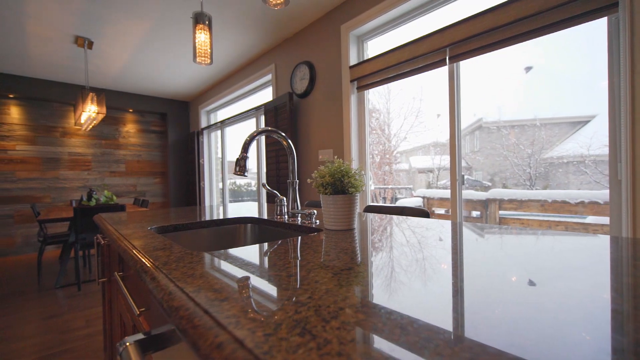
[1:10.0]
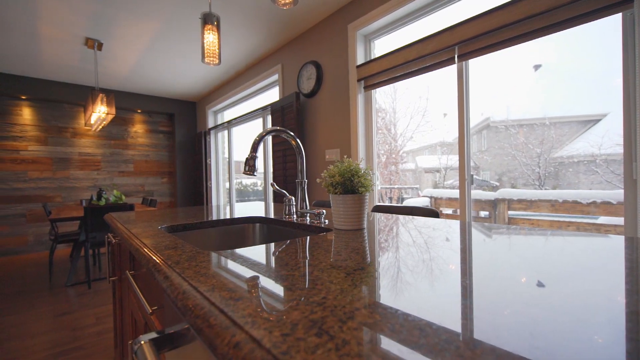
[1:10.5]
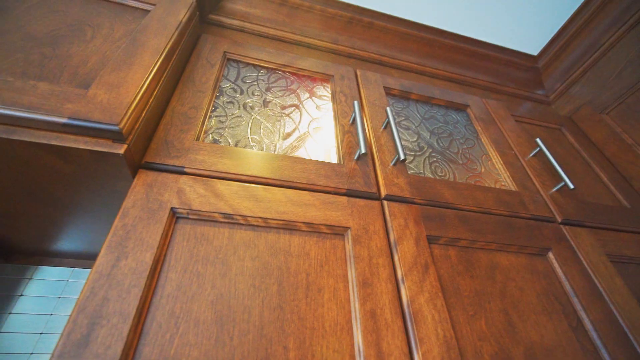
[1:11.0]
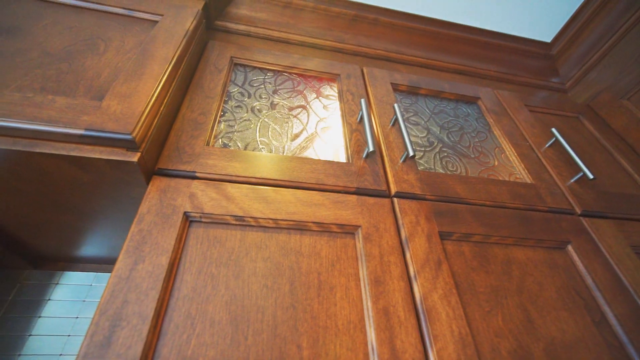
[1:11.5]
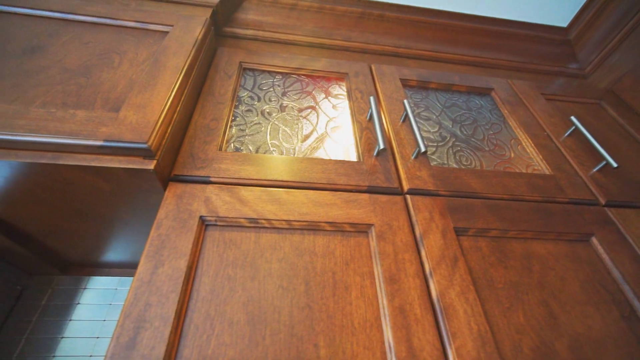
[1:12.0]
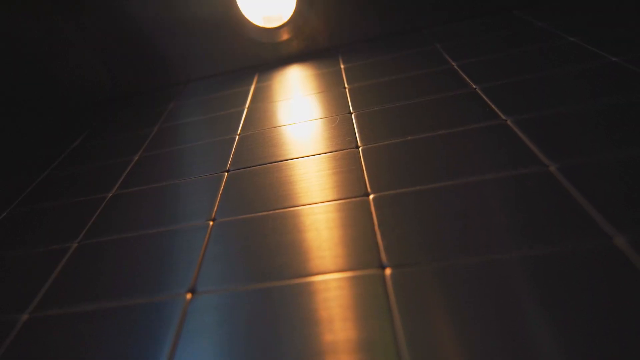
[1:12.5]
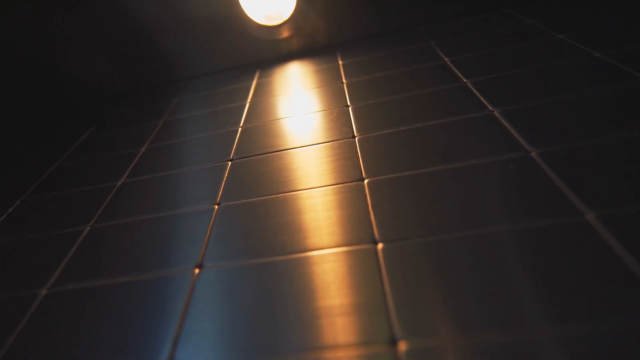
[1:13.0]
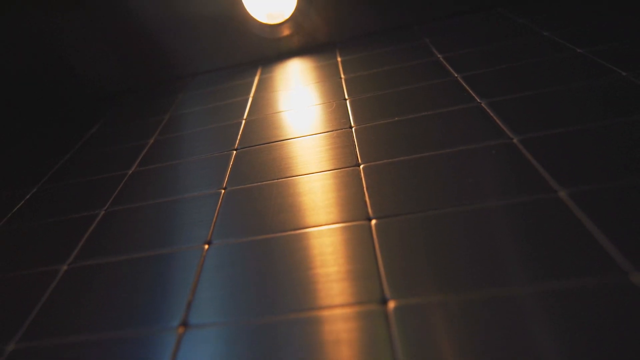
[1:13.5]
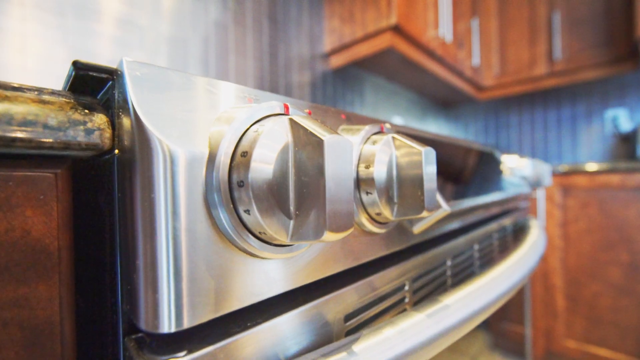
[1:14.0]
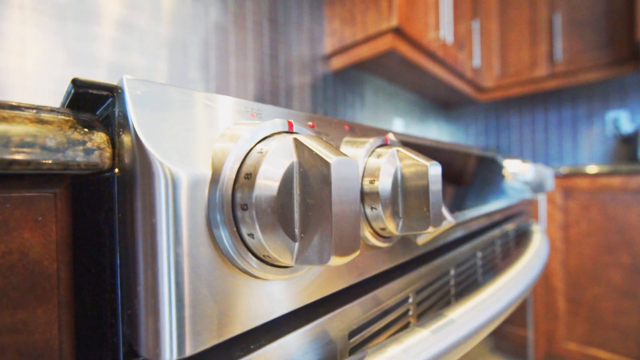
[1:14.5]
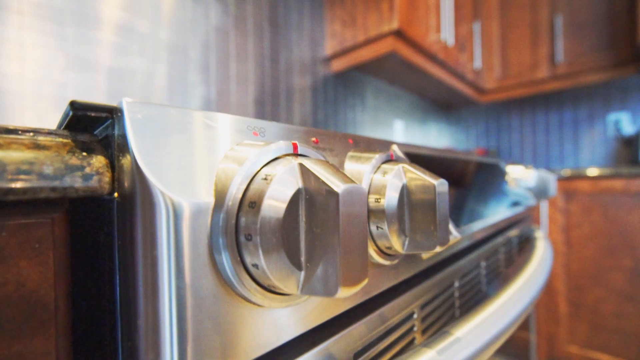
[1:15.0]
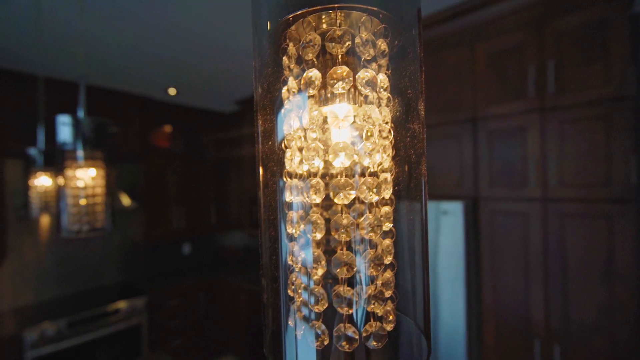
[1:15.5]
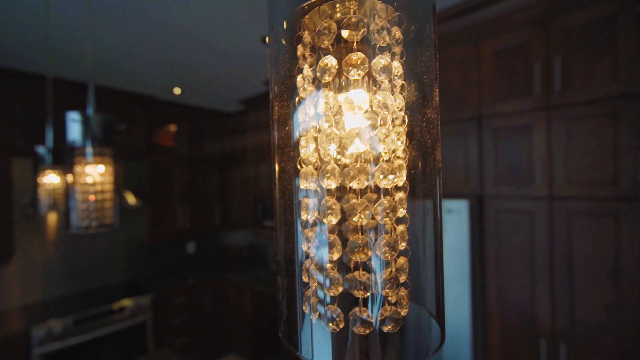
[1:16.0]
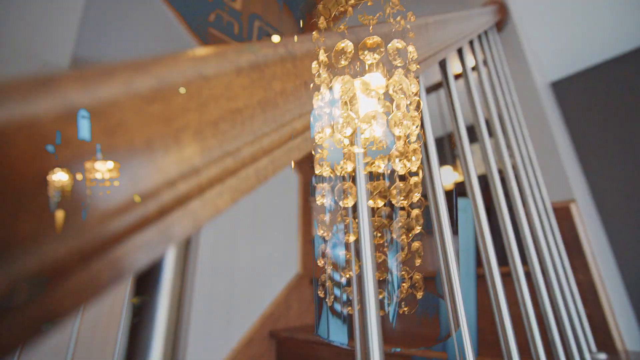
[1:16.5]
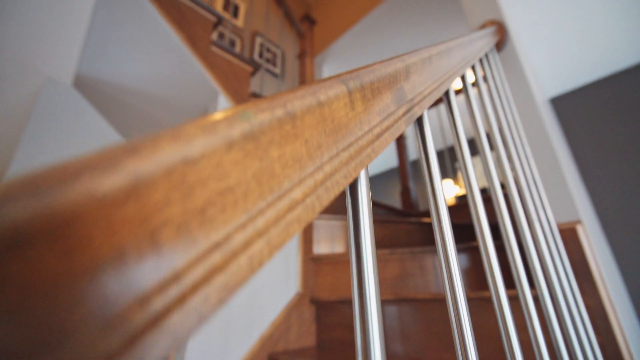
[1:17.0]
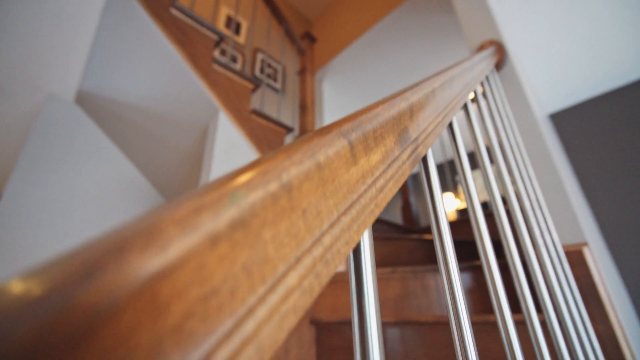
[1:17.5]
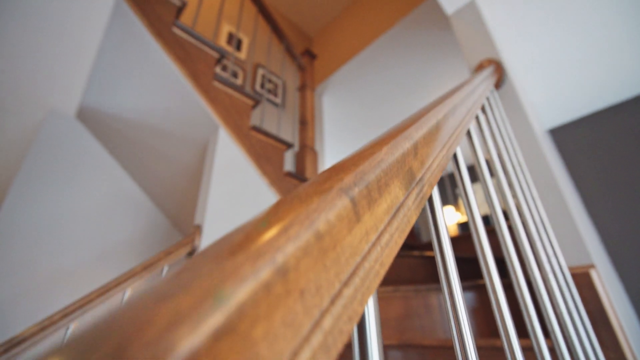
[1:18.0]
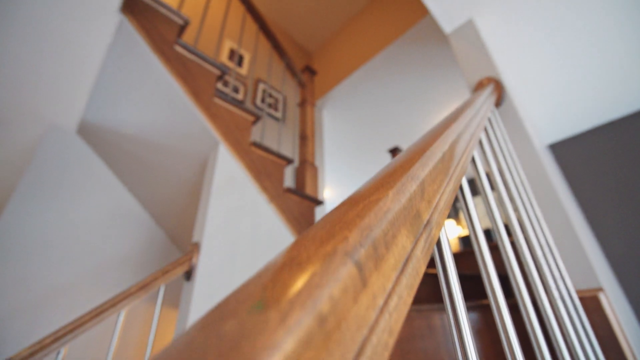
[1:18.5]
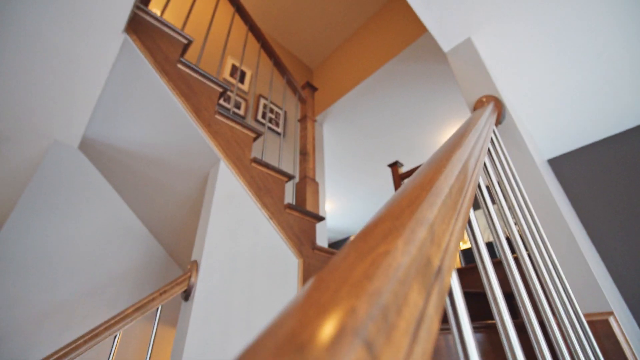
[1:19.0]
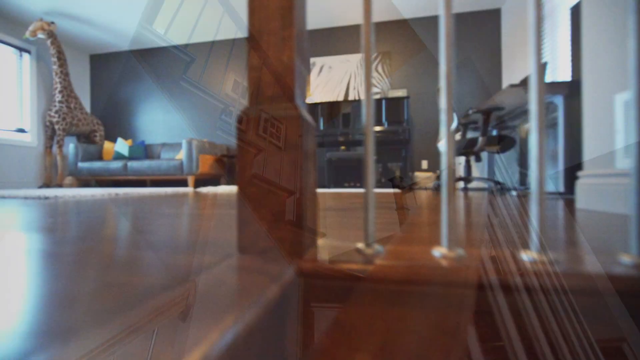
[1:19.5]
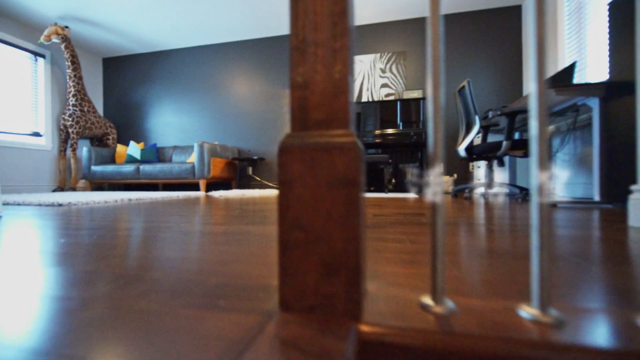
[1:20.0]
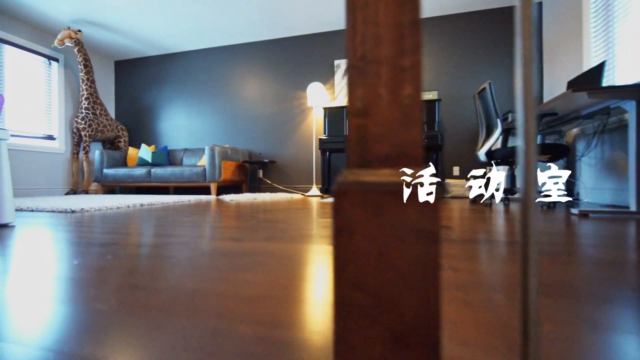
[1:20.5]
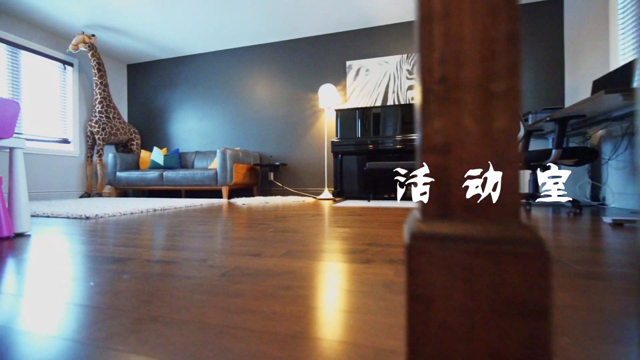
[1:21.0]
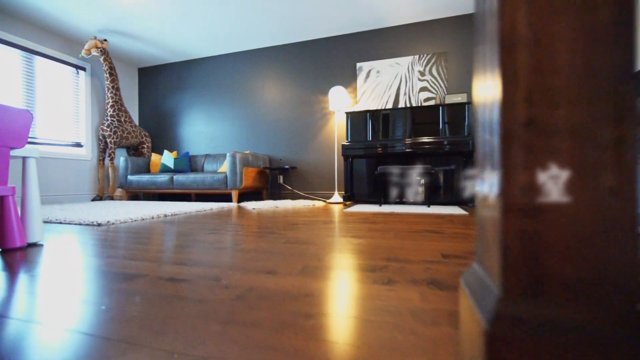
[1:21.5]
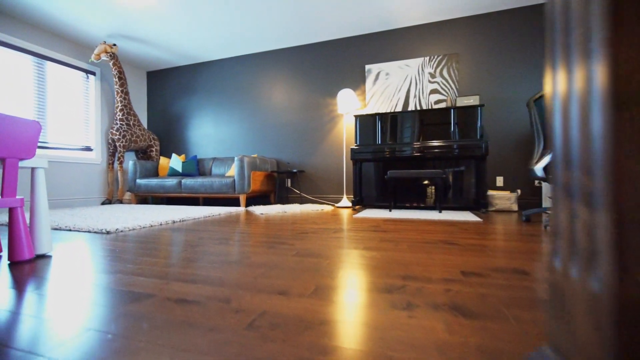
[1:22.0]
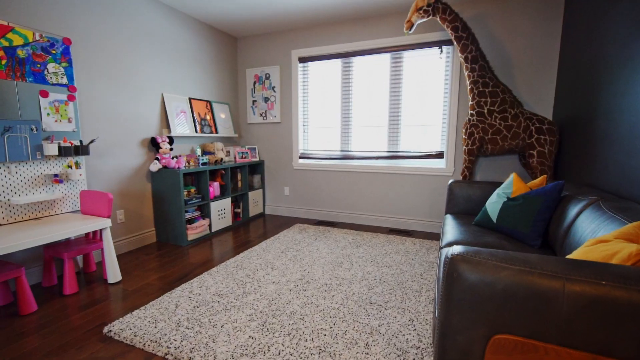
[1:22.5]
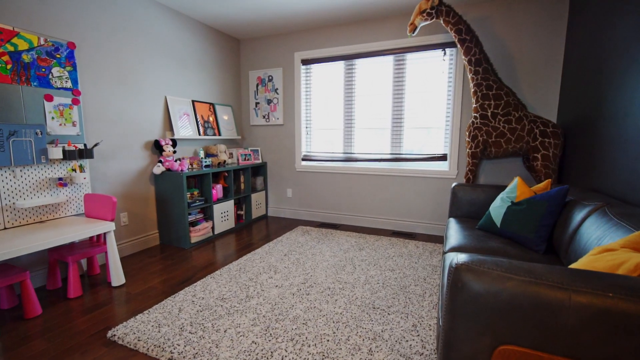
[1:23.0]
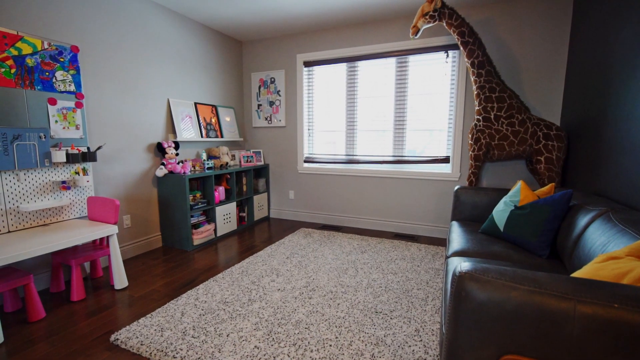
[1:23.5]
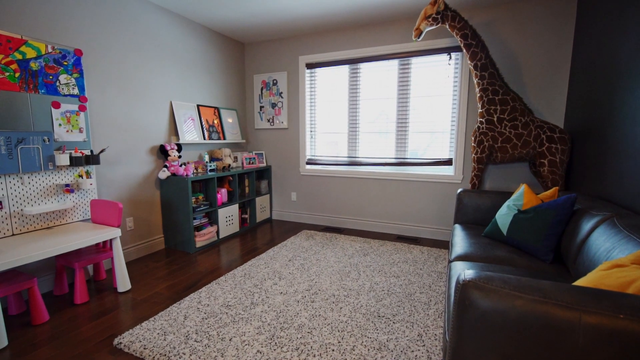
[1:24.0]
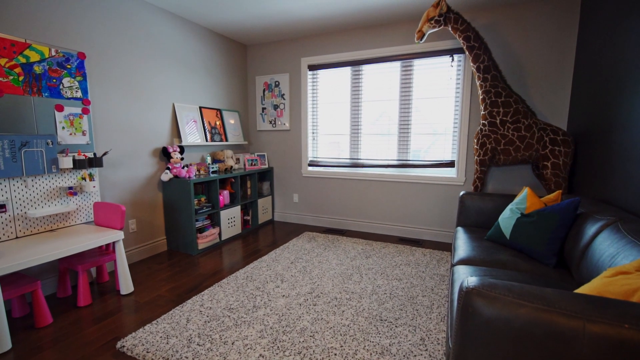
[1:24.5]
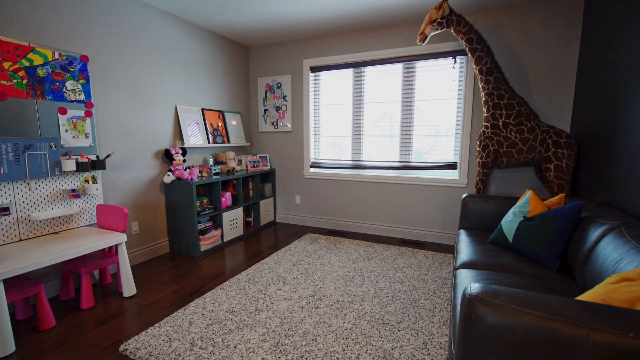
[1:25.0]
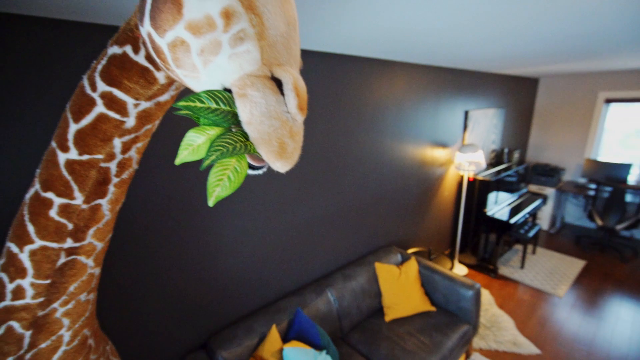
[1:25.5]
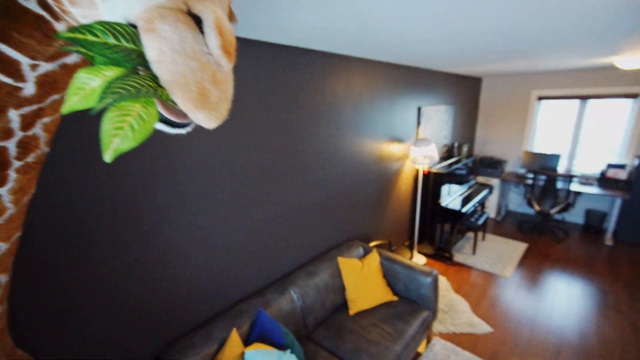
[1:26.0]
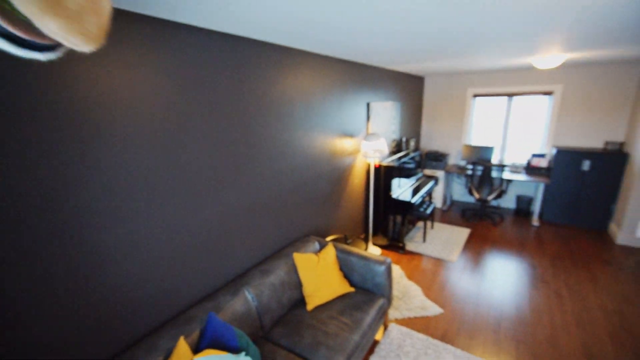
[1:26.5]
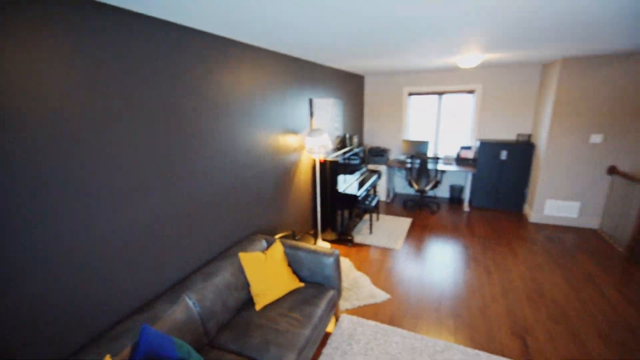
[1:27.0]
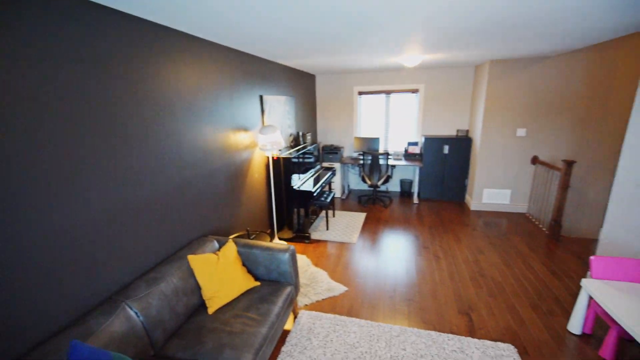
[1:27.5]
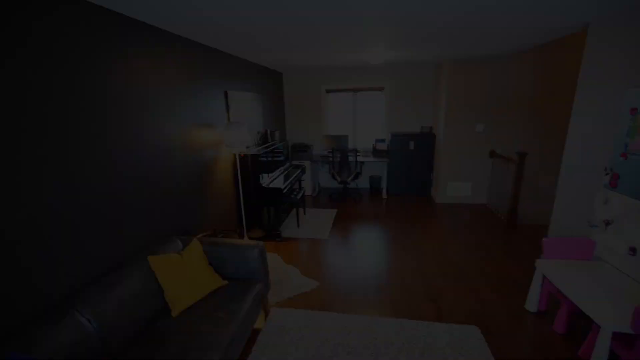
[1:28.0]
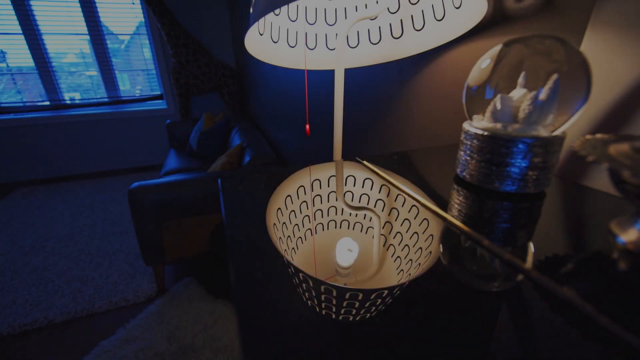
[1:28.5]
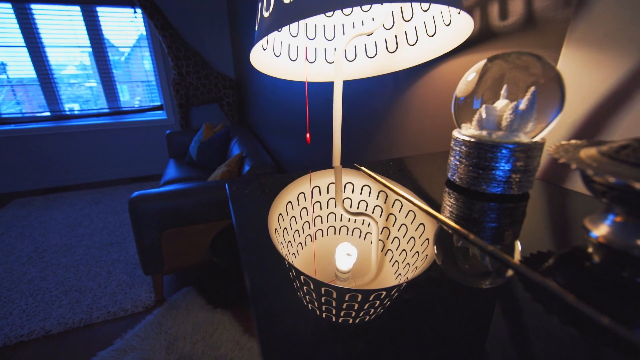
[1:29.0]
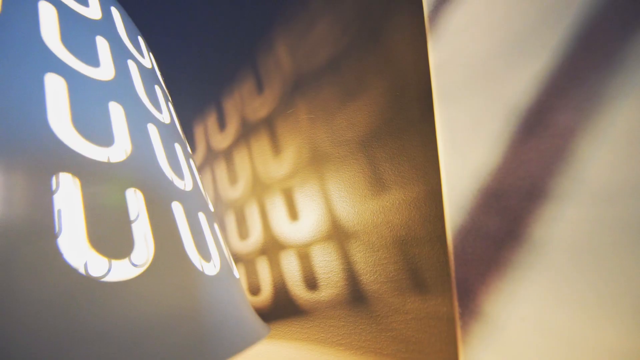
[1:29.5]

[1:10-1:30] The front faces of some brown wooden cabinets are shown, with a cutout section inside holding what looks like designed glass. The camera starts upward on some dark tiling and moves downward, then changes to a close view of the oven's front face with the knobs and goes upward. Another angle goes up a staircase that runs one way, makes a 180-degree turn, and continues up a second flight. The camera then apparently moves to the upstairs rooms. One room has hardwood flooring, a dark back wall, a giraffe stuffed animal or decoration on the left, and a window. There appears to be a piano to the right, and the room appears to be a children's room, with a small white table with two pink chairs and a small bookshelf; the walls appear to be gray.